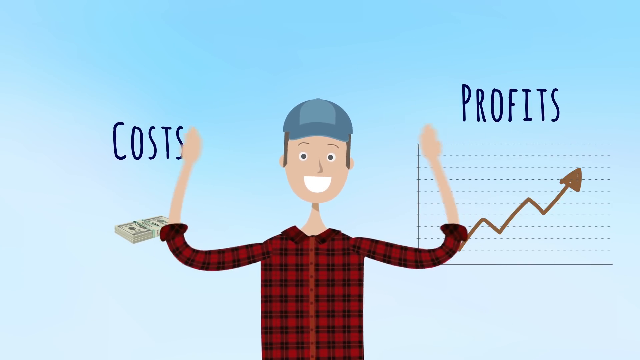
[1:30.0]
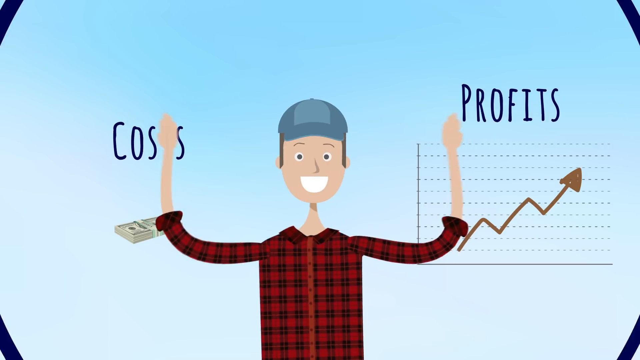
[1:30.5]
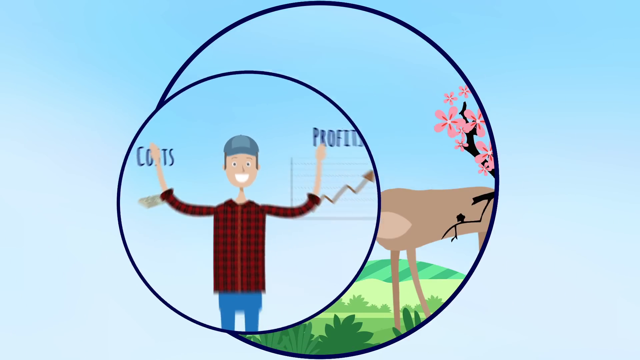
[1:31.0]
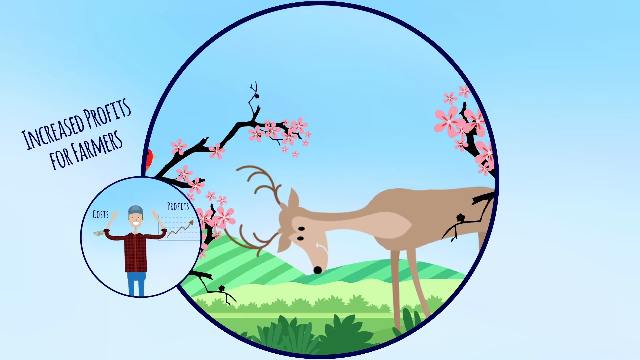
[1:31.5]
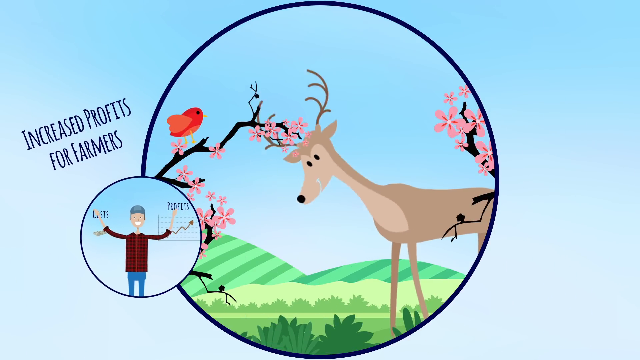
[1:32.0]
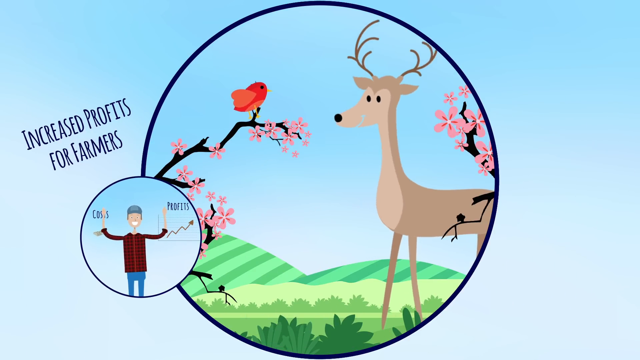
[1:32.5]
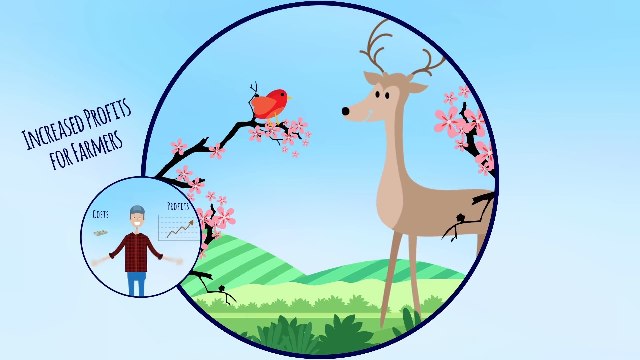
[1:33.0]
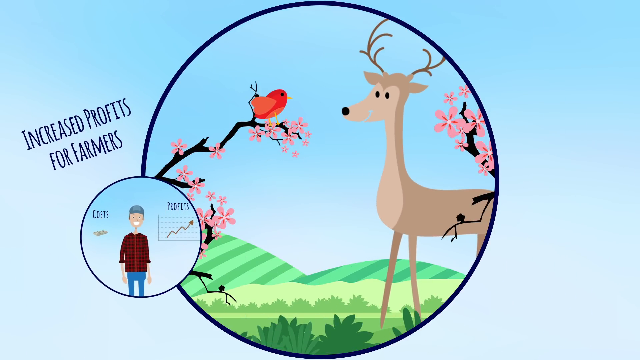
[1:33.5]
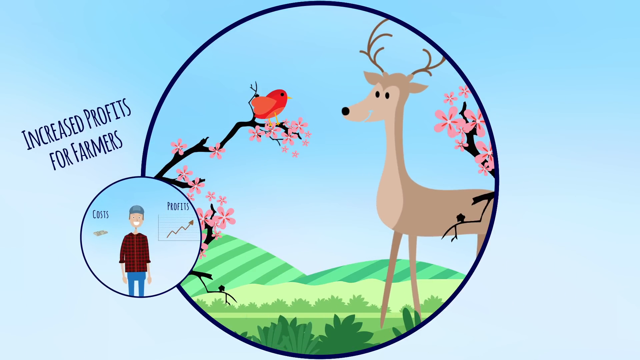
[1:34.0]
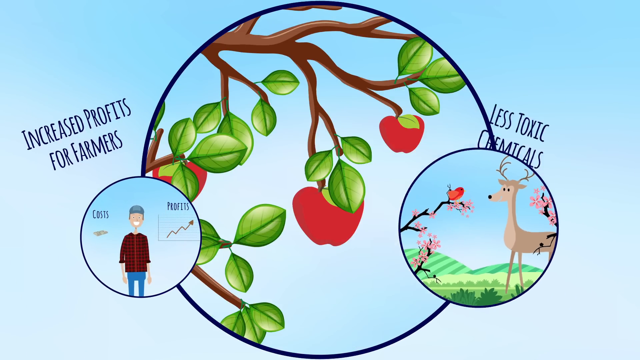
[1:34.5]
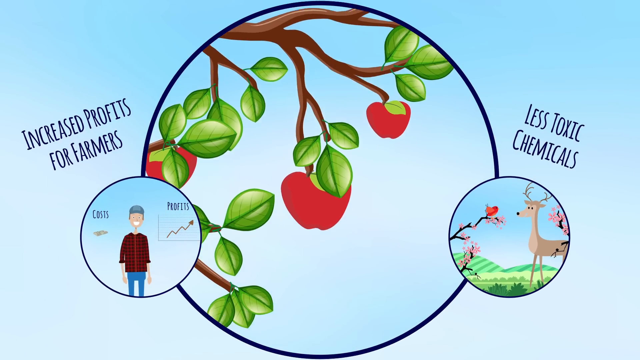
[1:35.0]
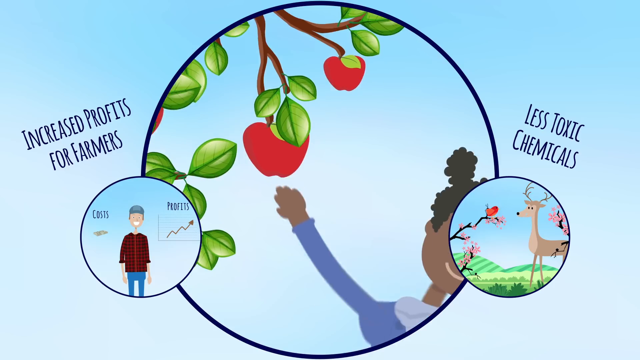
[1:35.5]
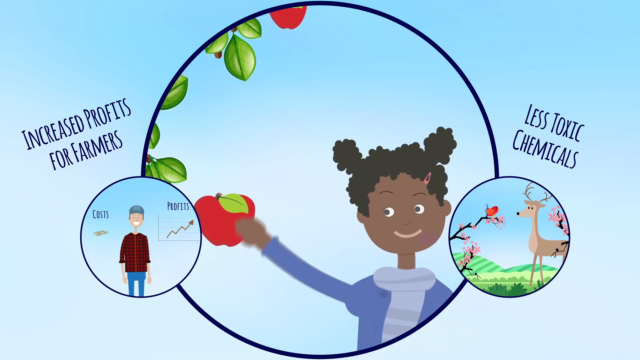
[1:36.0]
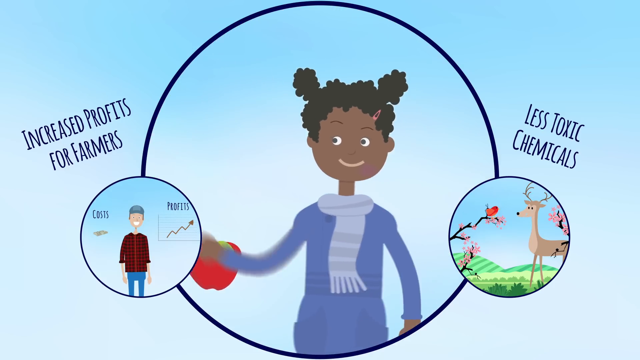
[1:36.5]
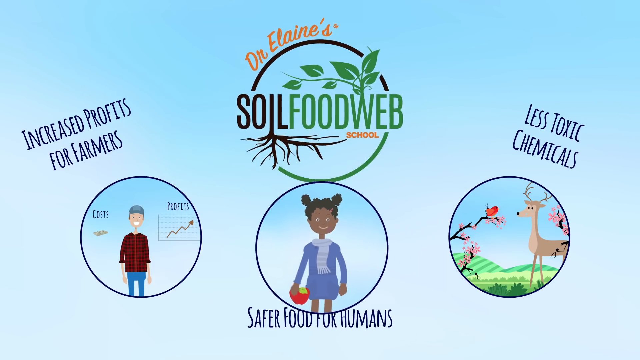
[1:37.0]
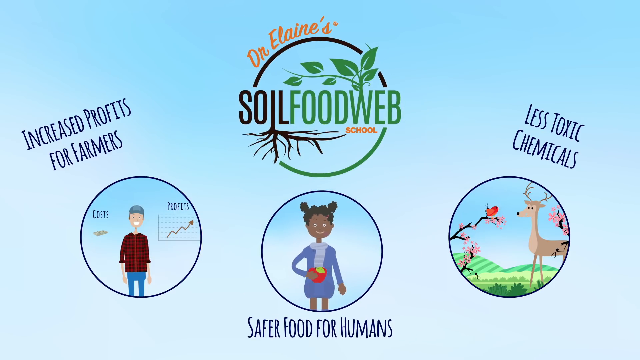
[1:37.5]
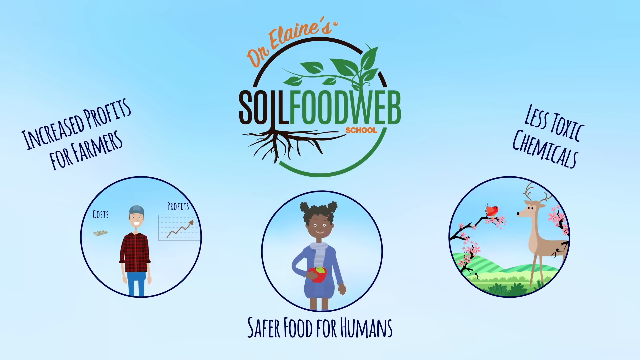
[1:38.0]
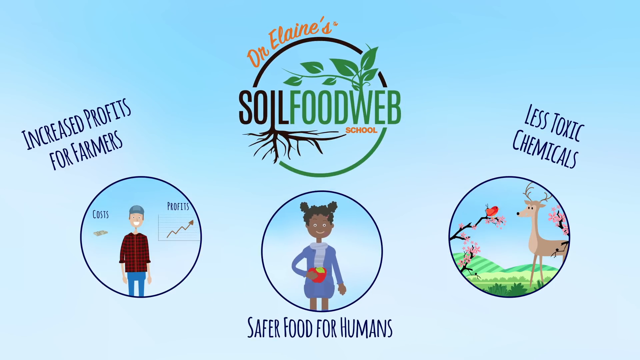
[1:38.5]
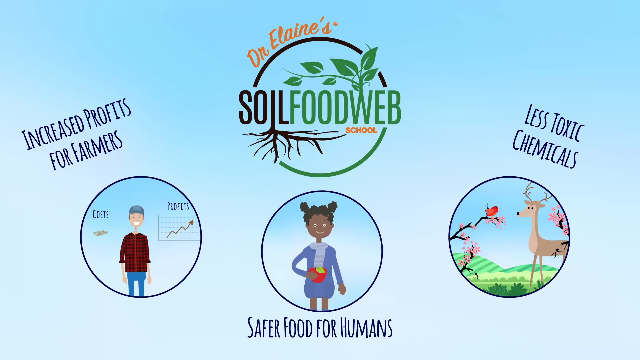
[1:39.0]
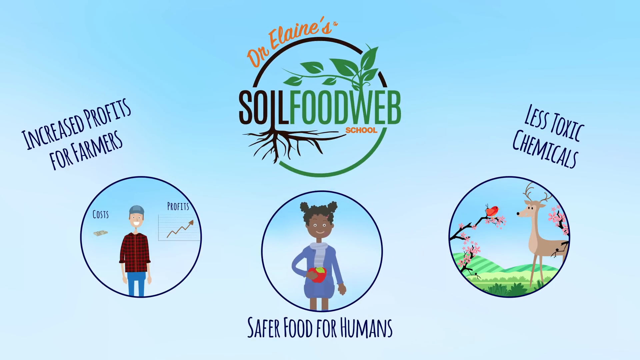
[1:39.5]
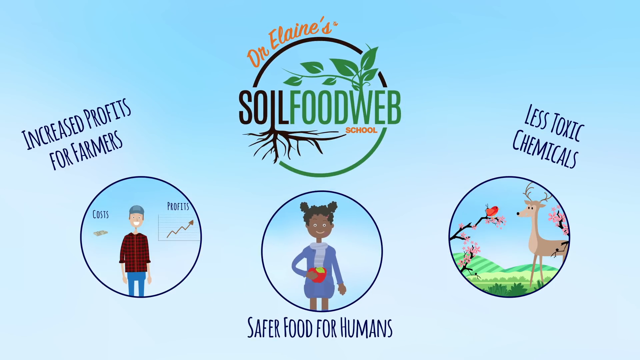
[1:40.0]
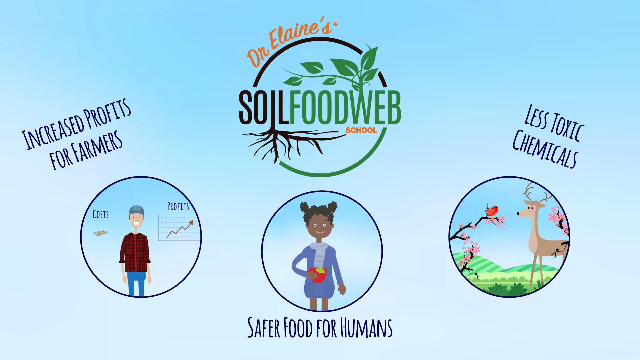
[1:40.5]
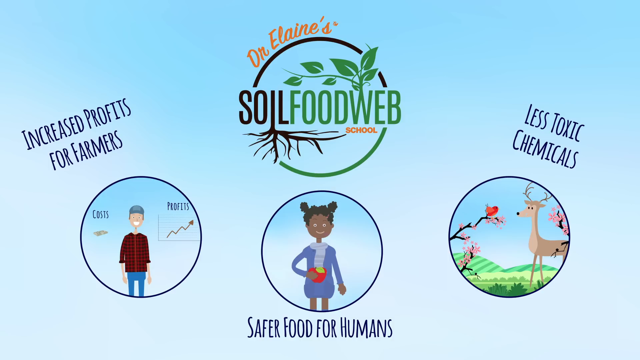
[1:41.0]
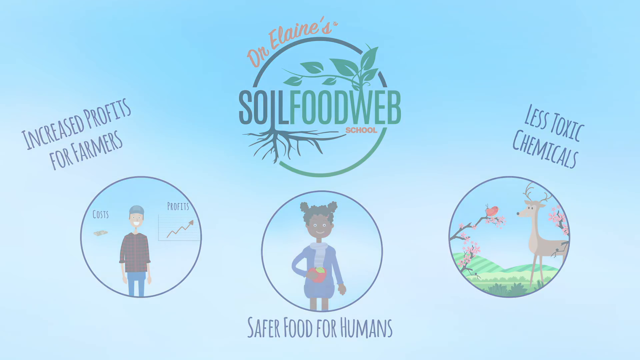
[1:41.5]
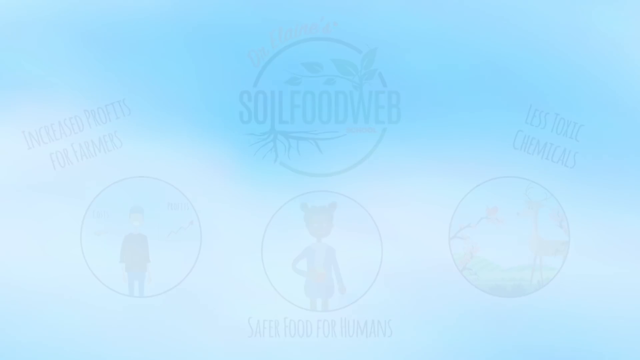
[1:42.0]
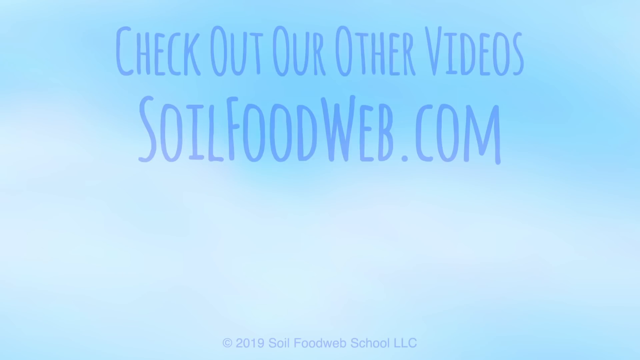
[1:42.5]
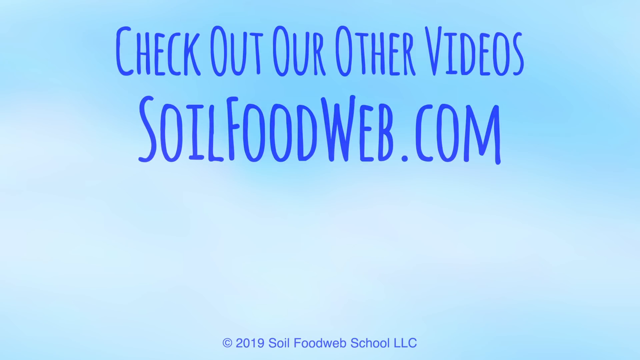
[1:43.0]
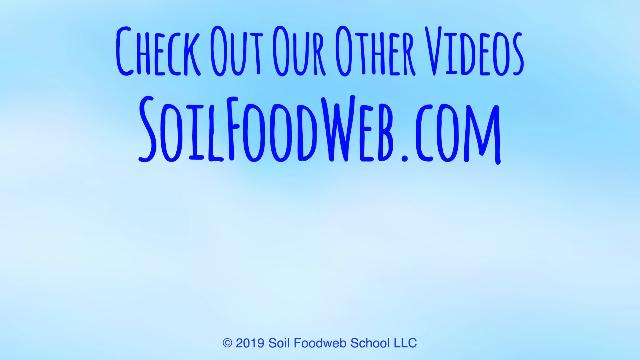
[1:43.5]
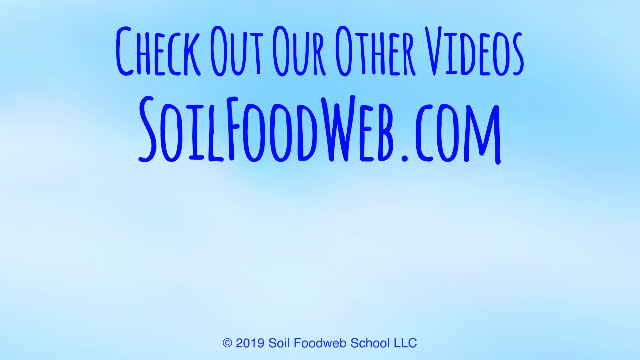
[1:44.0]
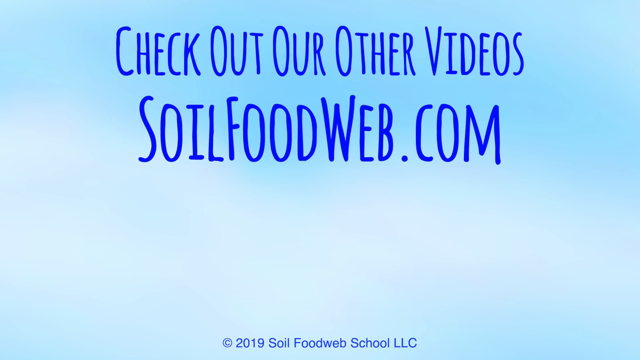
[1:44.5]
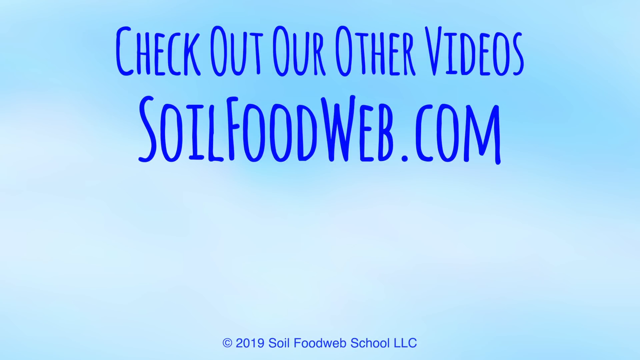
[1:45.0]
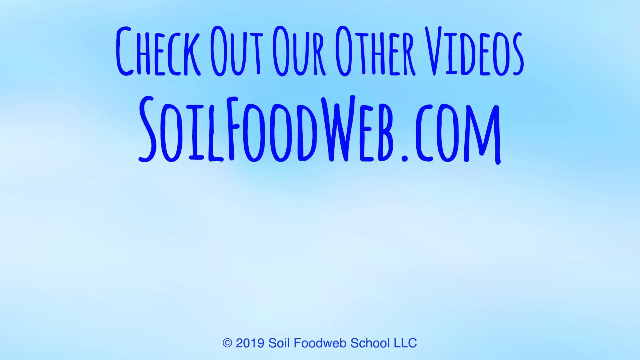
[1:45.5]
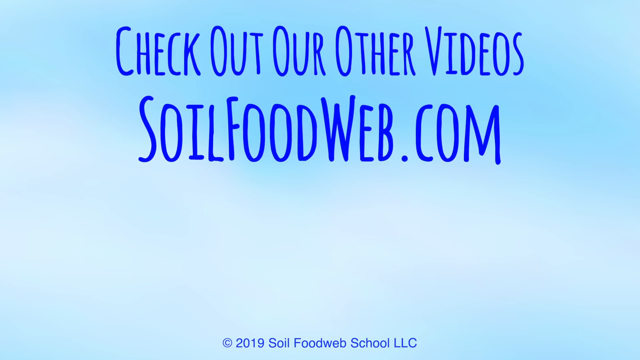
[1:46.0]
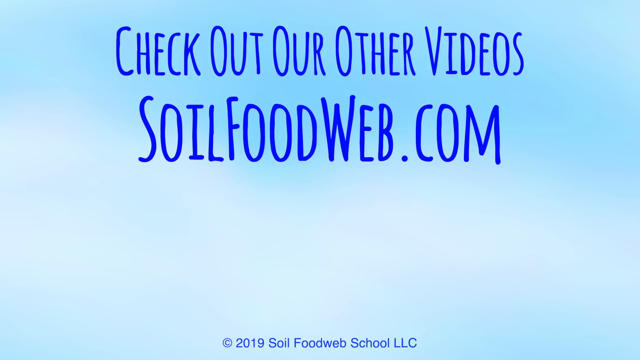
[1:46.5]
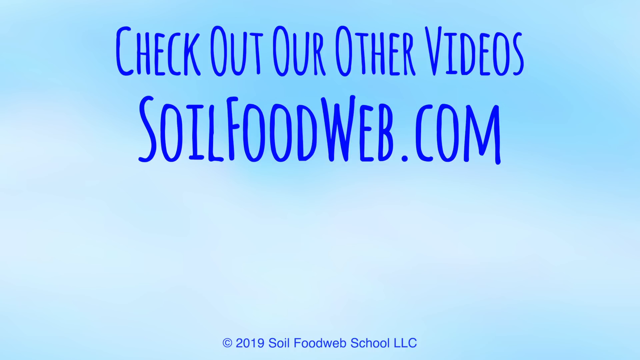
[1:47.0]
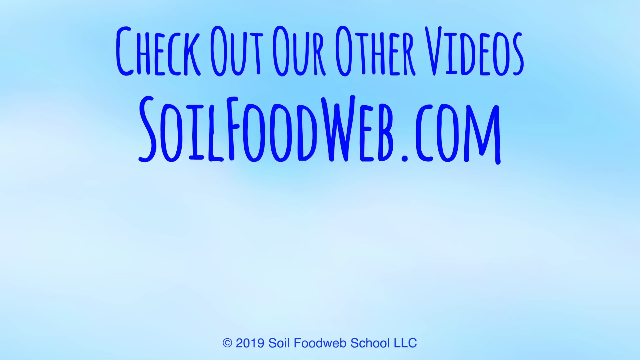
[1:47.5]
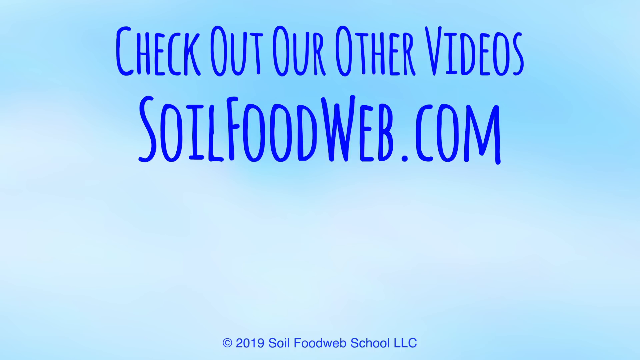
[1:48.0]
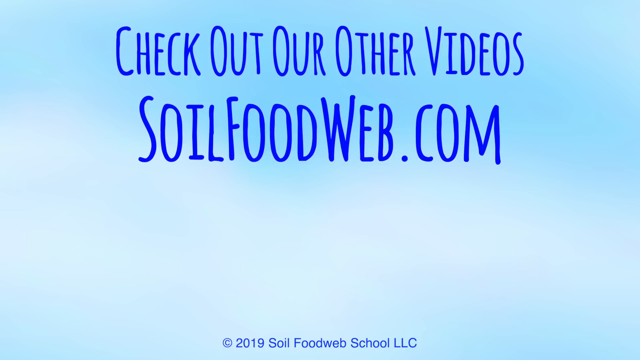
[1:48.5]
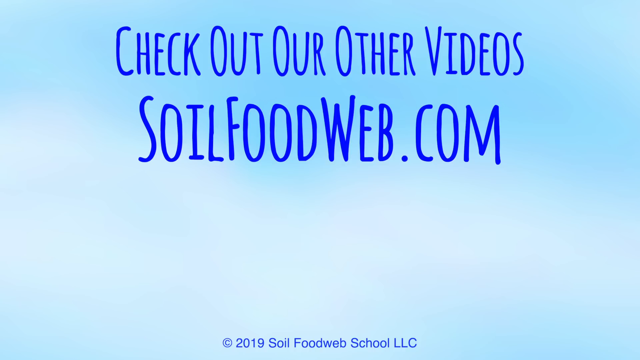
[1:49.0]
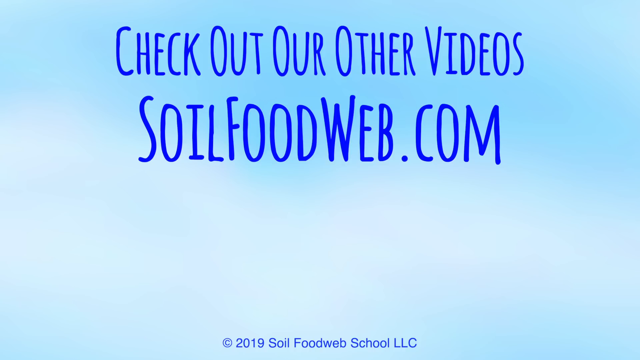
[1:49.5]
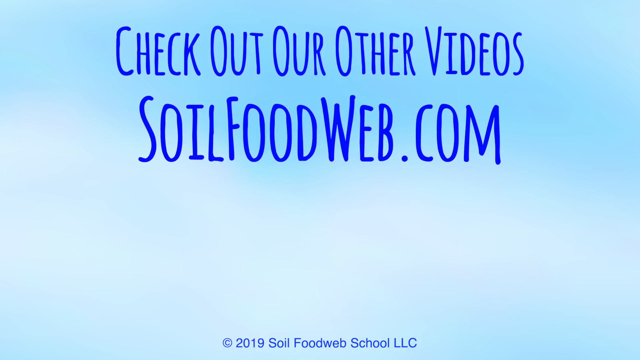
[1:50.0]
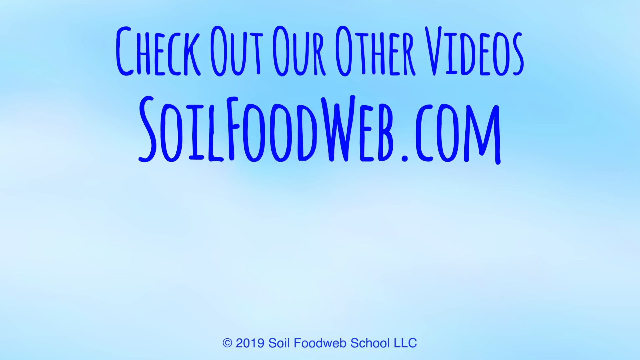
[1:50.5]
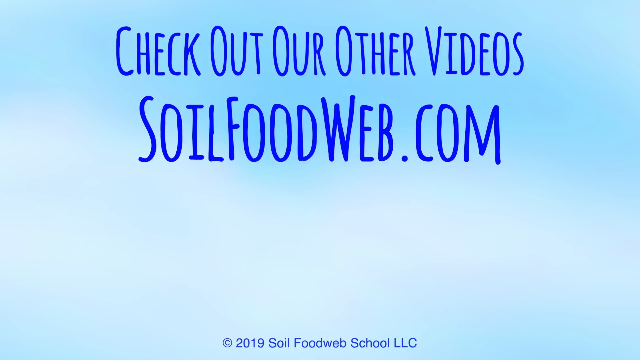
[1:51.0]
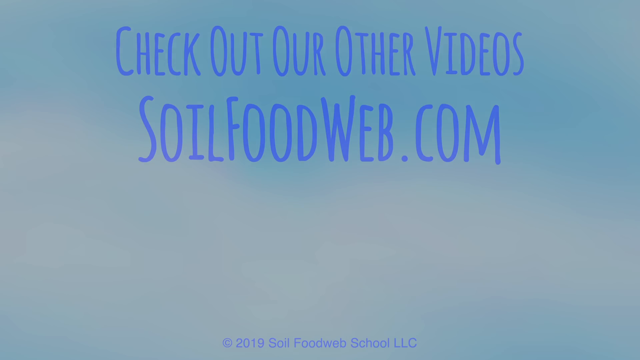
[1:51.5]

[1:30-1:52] A cartoon man in the middle waves his arms and looks happy, with money on his left labeled "Cost" and, on his right, a graph with an arrow pointing upward labeled "profits". That image slowly fades into a smaller image, and a larger image of what appears to be a deer and a small red bird pops up, with "increased profits for farmers" on its left side. This image gets smaller on the right side, and the middle image changes to what appears to be a girl picking an apple, with "Less toxic chemicals" on the right side. That image gets smaller and moves to the middle, with "Dr. Elaine's Soul Food Web School" above it and "safer food for humans" below the image of the girl. The images then fade away, and the words "check out our other videos soulfoodweb.com" come up.